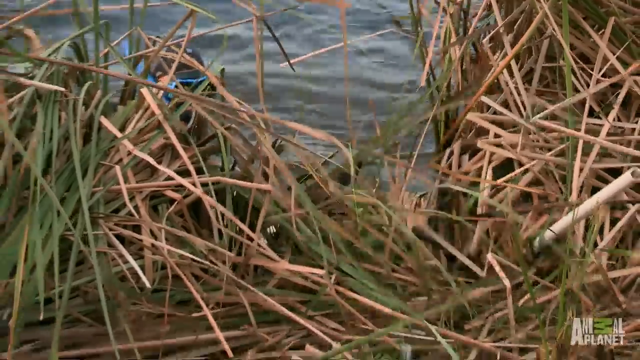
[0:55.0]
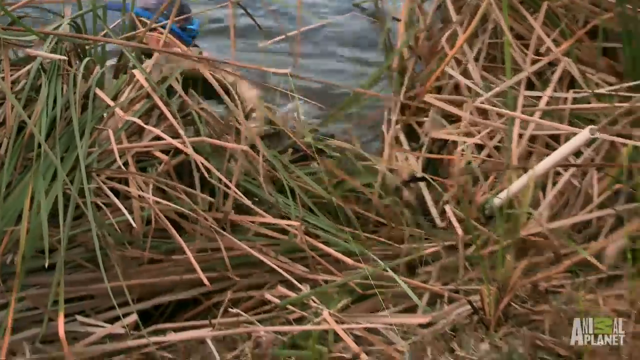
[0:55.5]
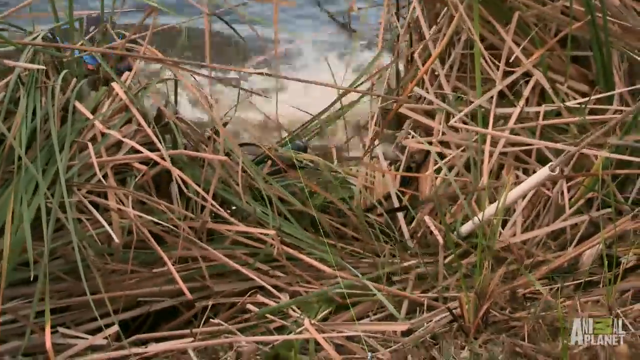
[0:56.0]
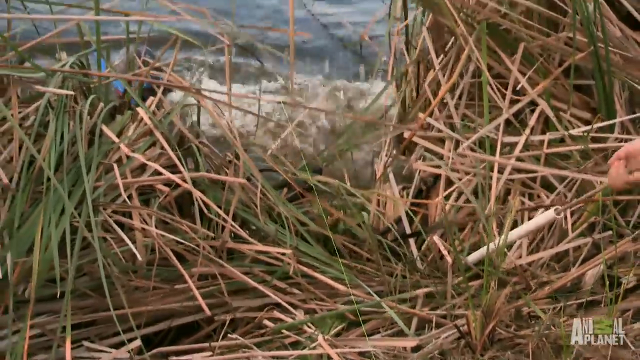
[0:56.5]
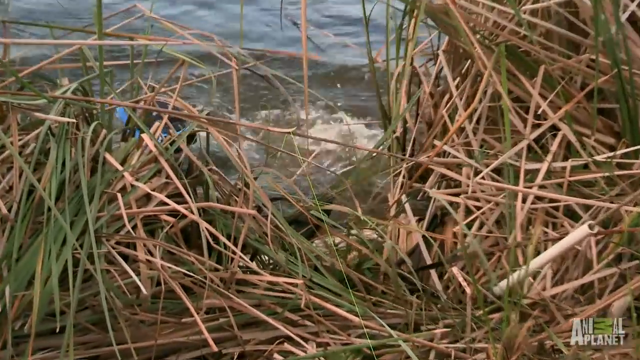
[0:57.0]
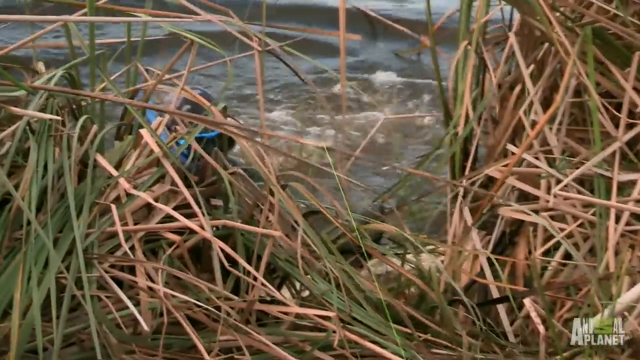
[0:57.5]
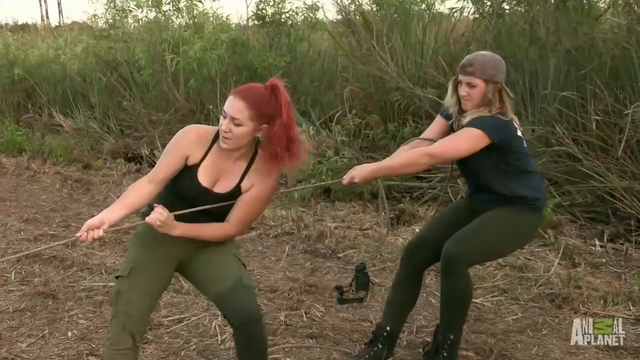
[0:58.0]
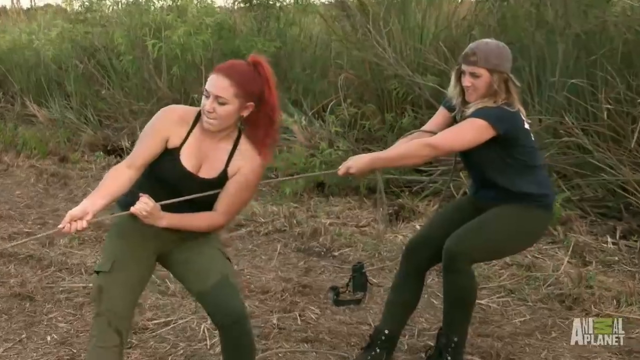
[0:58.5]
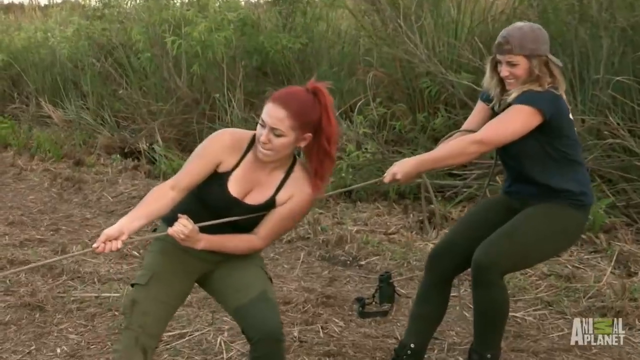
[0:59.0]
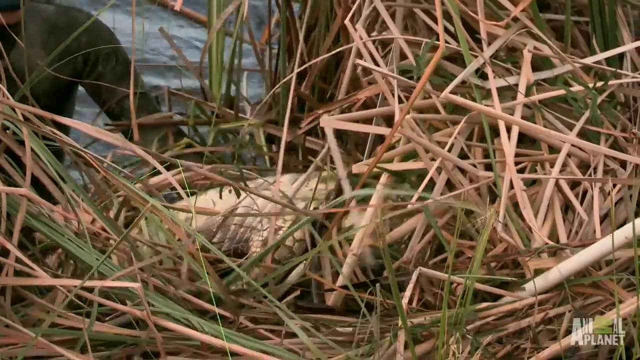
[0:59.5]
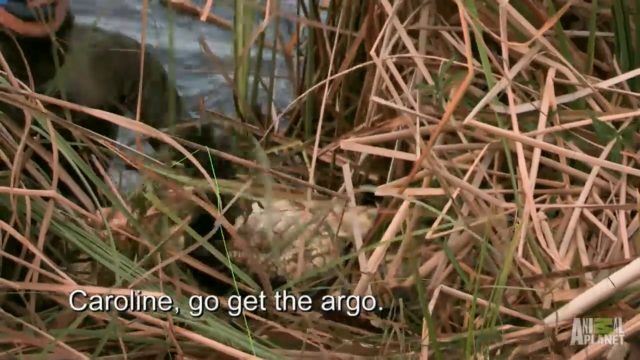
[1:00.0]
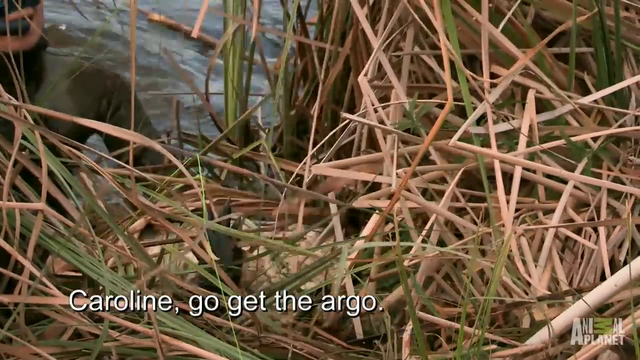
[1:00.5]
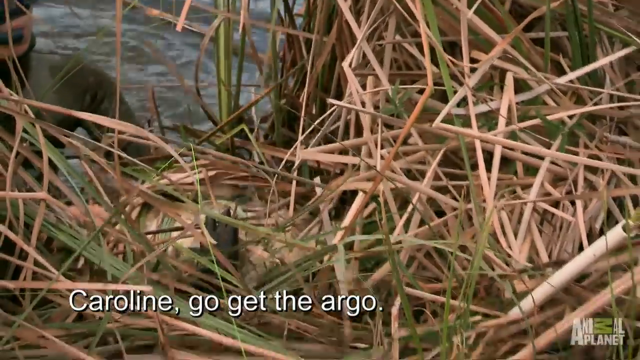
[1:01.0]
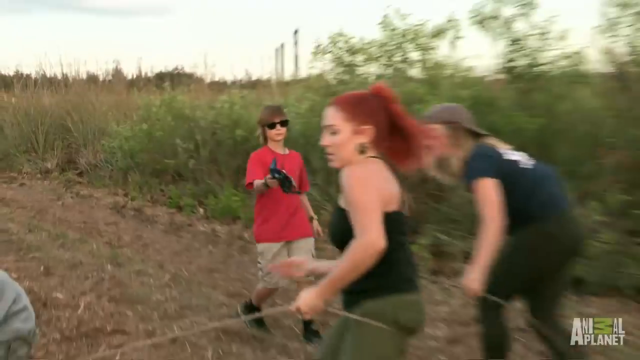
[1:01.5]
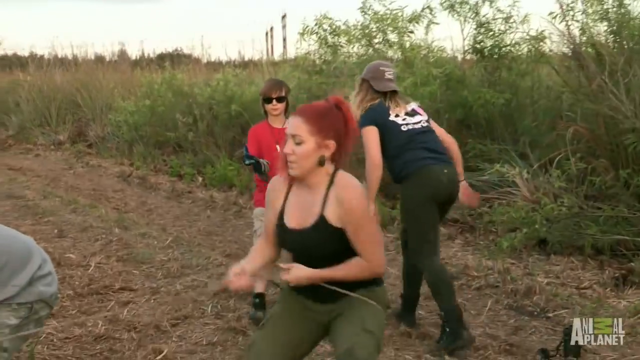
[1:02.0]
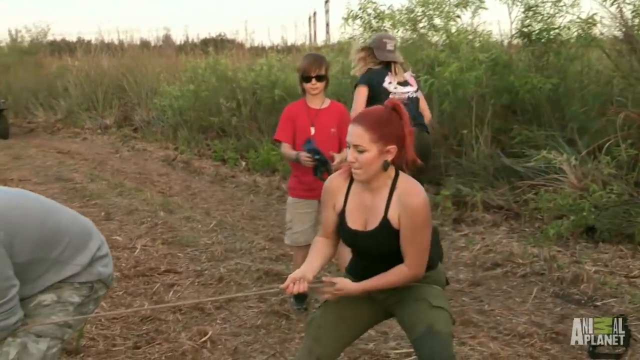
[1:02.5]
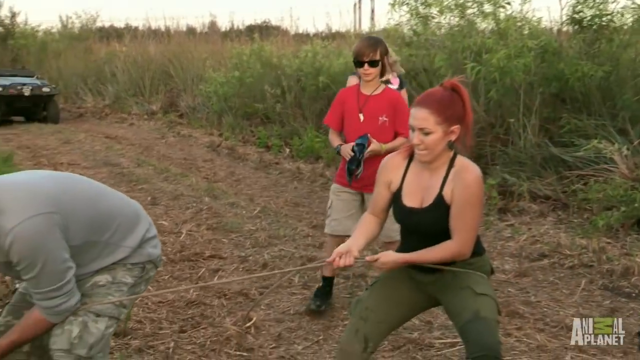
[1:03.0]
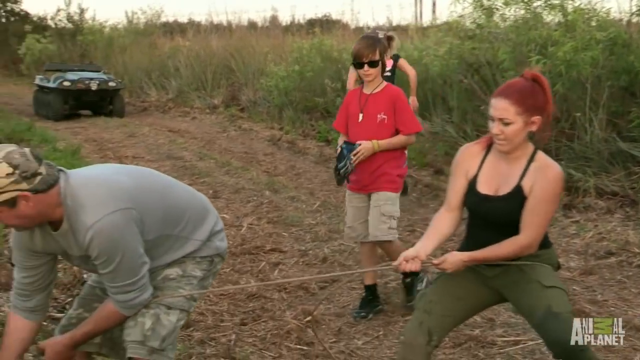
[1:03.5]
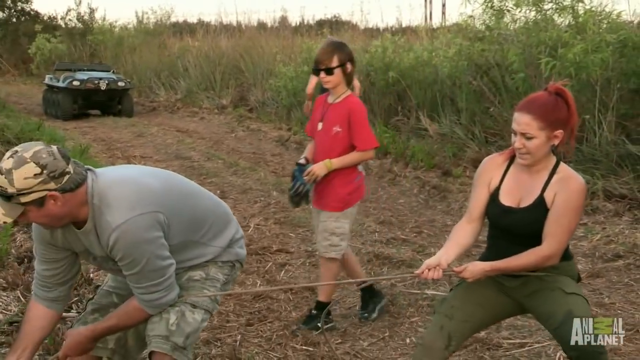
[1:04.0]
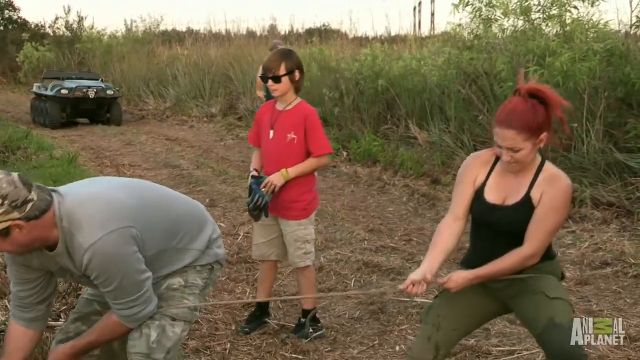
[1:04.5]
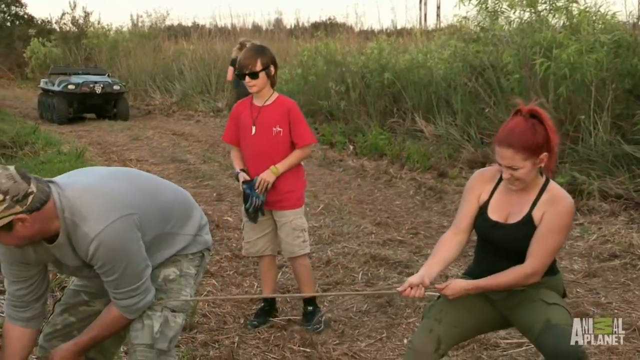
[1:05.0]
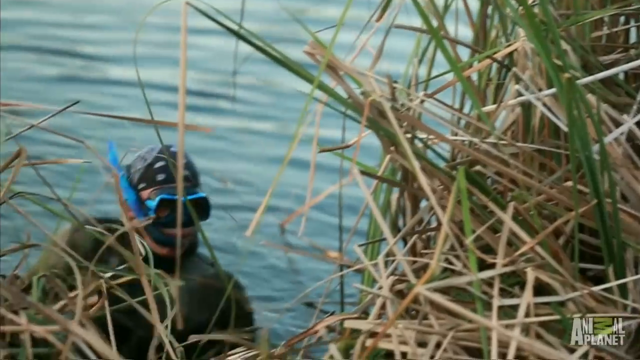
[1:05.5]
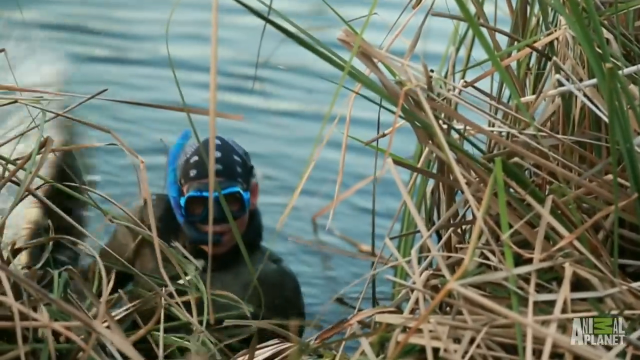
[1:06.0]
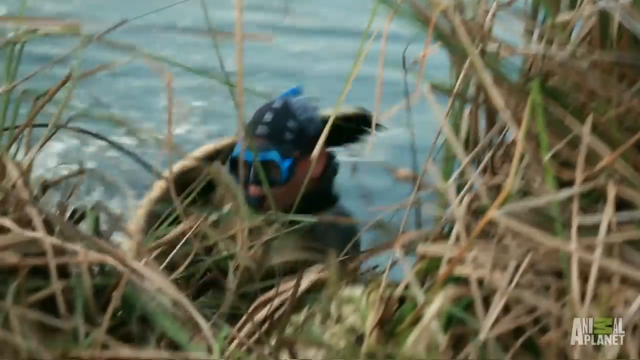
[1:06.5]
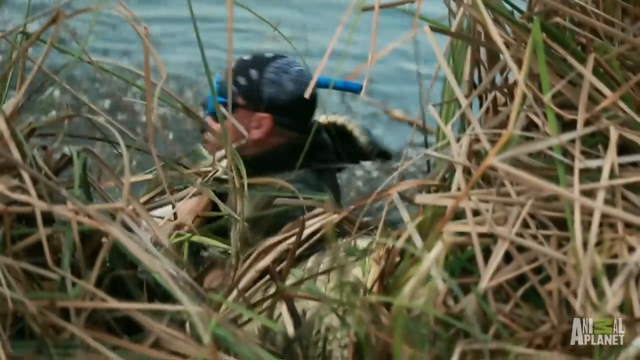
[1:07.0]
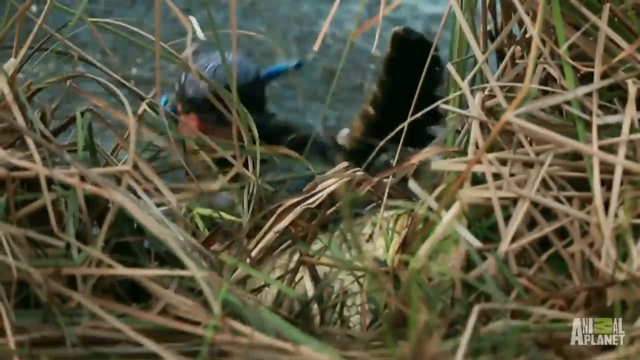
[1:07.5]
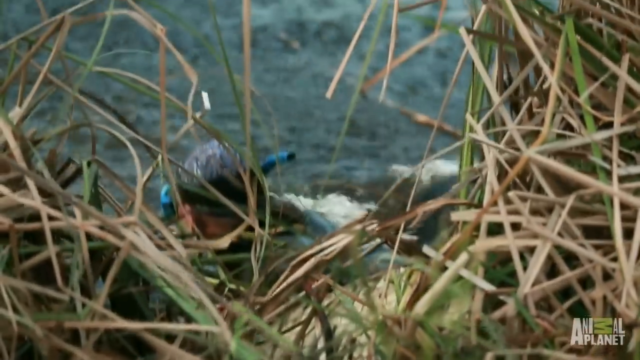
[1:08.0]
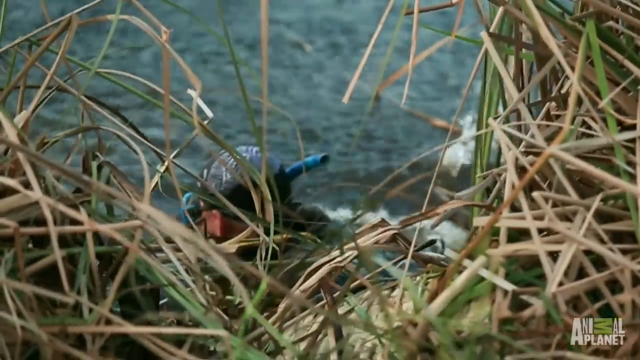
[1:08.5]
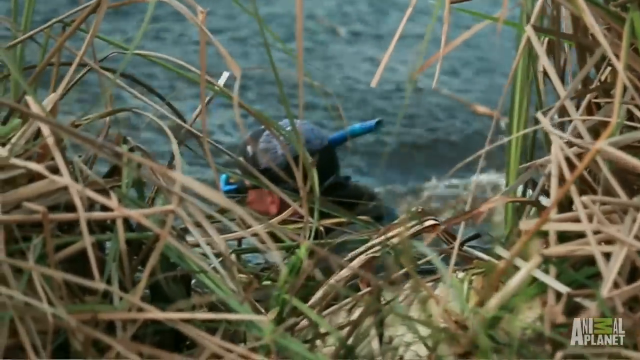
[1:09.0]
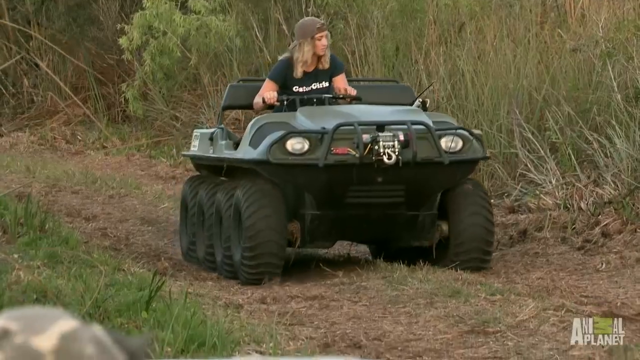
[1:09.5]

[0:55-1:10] The alligator thrashes against the reeds, spinning around in circles. The camera switches back to the two women, who appear to be pulling hard on the rope against the alligator, then back to the alligator being pulled through the reeds closer to the land, with the man in a wetsuit behind it. A younger boy with short brown hair, wearing a red t-shirt, khaki shorts, black shoes and sunglasses, walks up and appears to be holding gloves. The scene switches back to the man wearing scuba goggles, a bandana and what looks like a wetsuit, with the alligator thrashing behind him; the man seems to be struggling against it as its tail swings and whips backward behind him. A woman in a black t-shirt then drives up on some sort of all-terrain vehicle.